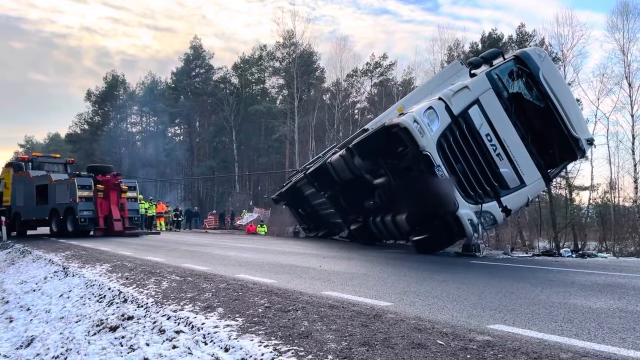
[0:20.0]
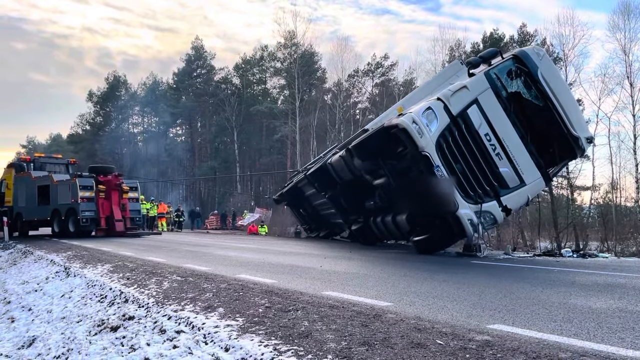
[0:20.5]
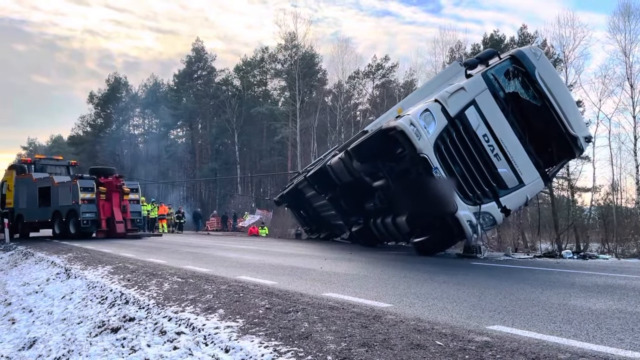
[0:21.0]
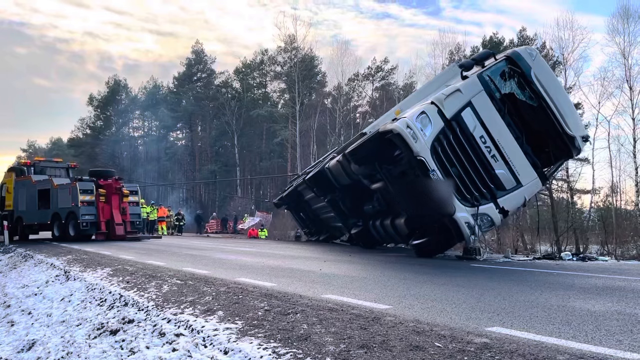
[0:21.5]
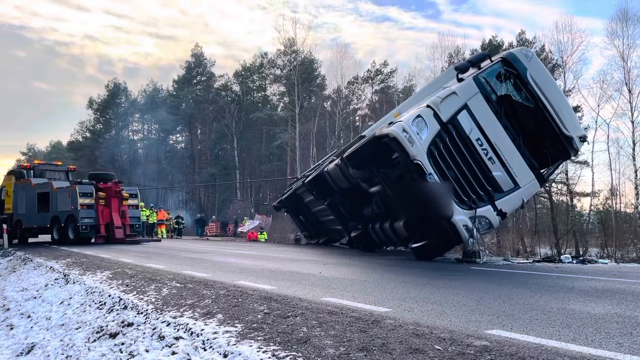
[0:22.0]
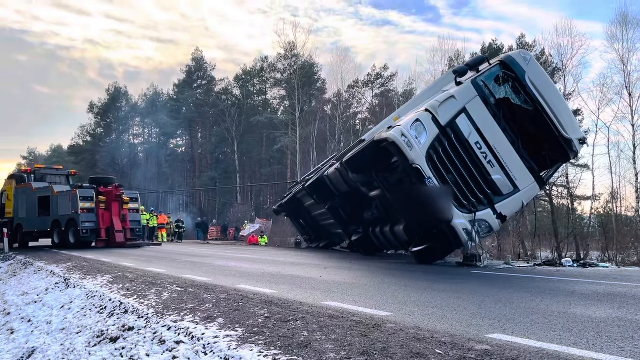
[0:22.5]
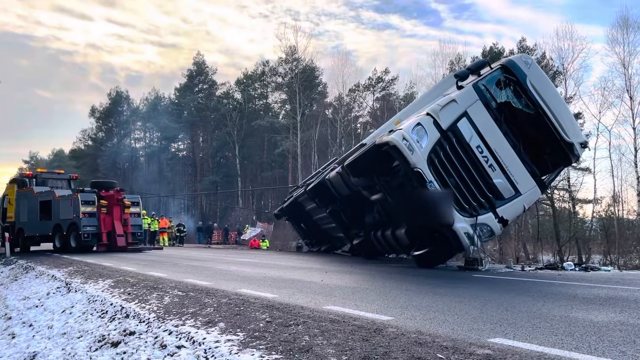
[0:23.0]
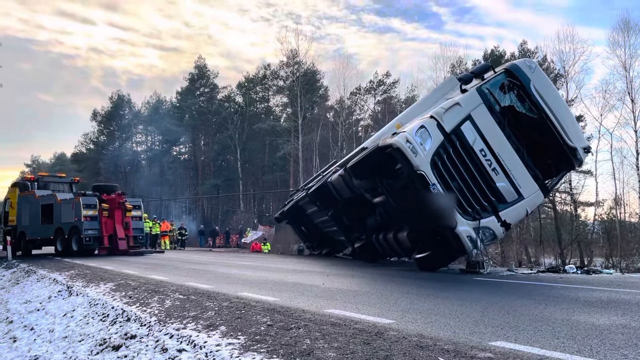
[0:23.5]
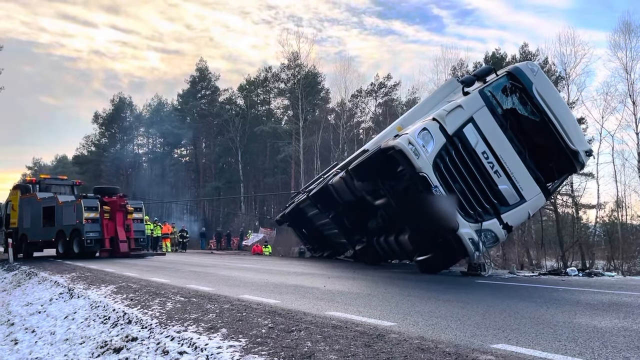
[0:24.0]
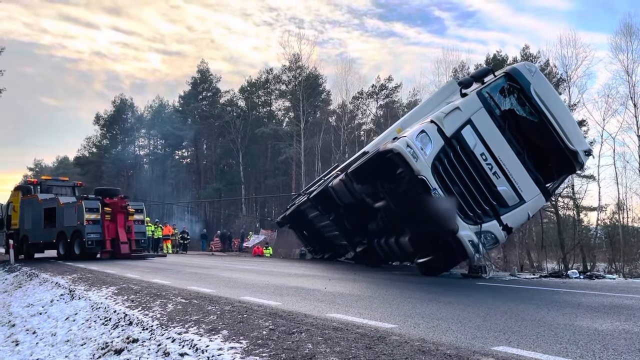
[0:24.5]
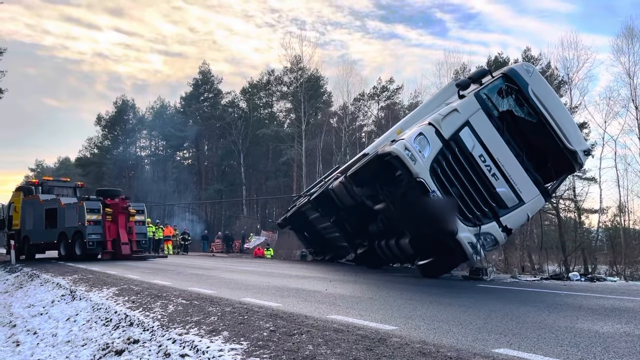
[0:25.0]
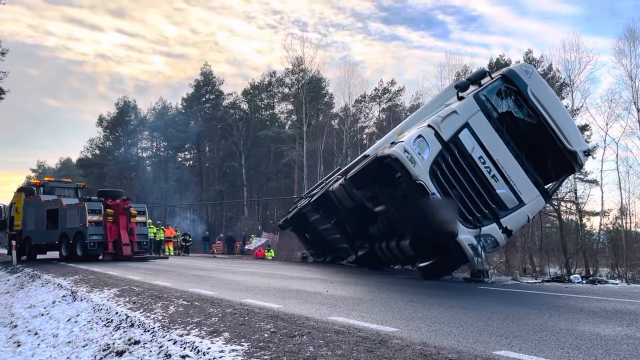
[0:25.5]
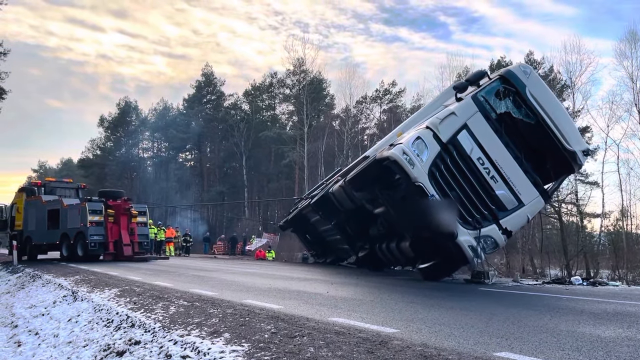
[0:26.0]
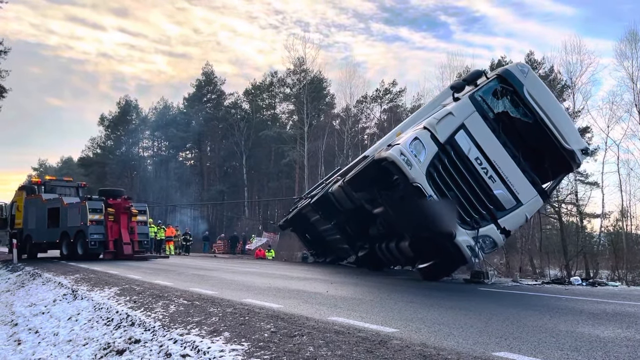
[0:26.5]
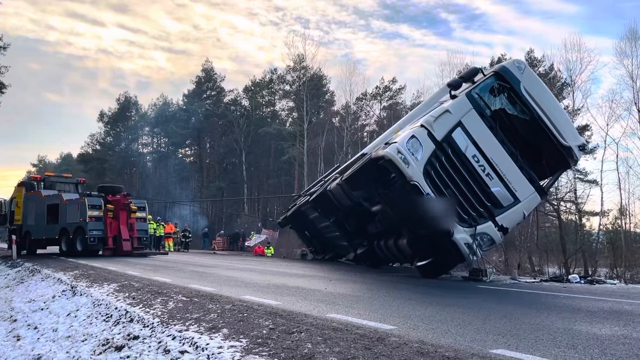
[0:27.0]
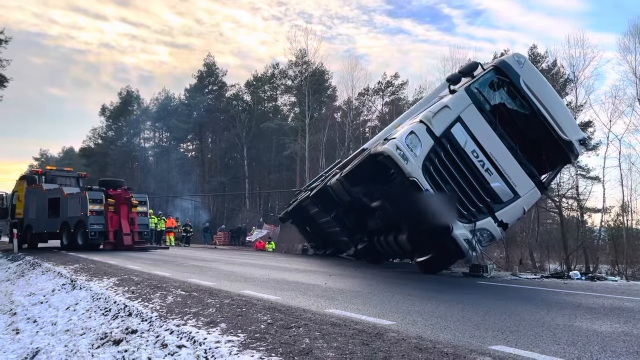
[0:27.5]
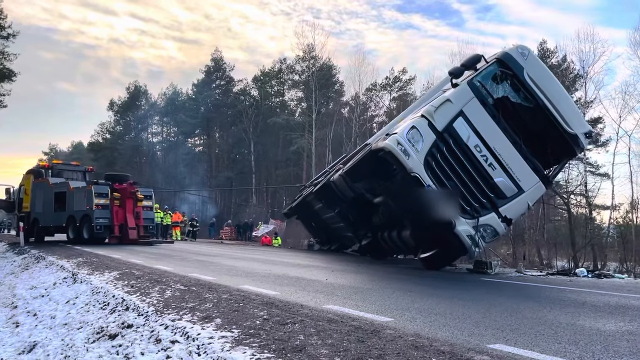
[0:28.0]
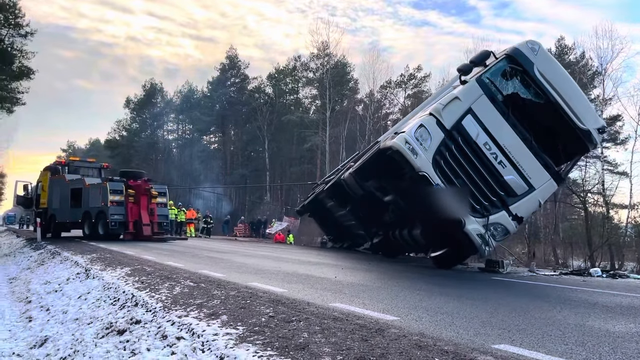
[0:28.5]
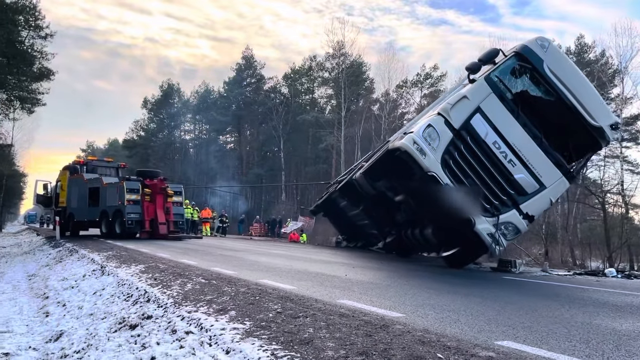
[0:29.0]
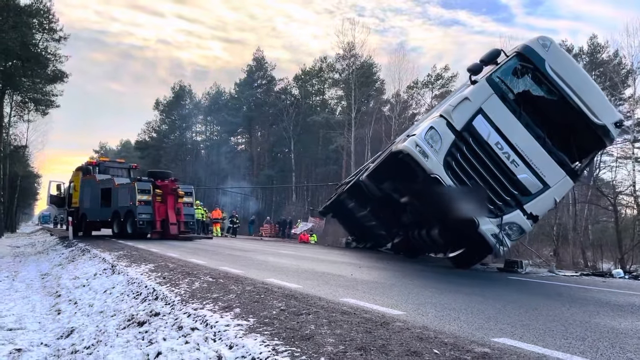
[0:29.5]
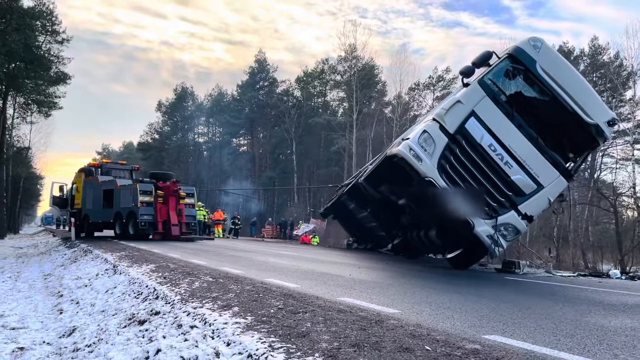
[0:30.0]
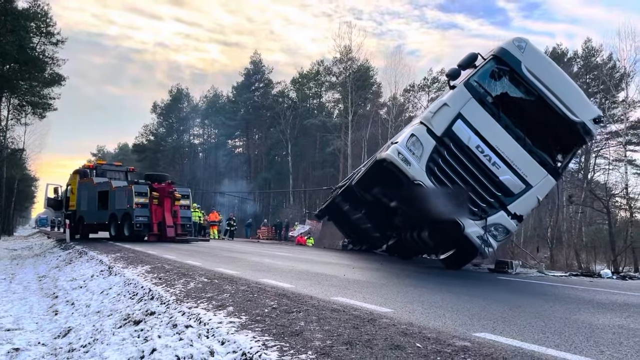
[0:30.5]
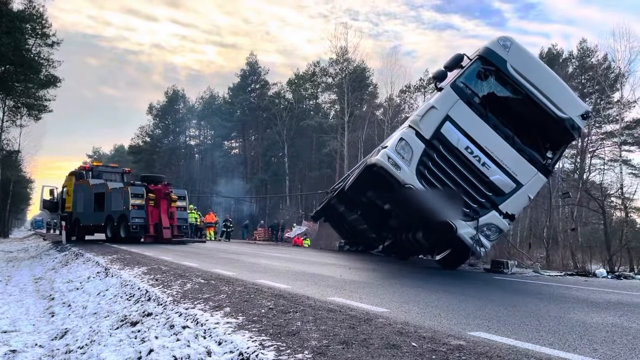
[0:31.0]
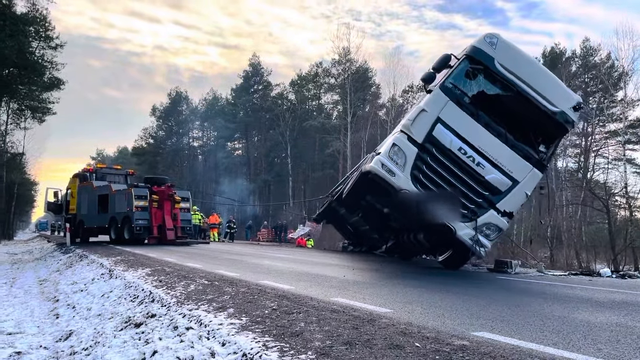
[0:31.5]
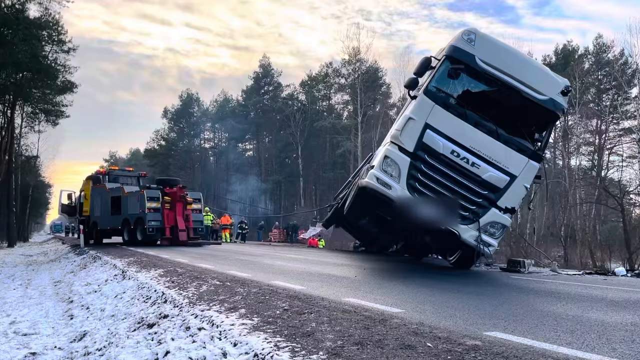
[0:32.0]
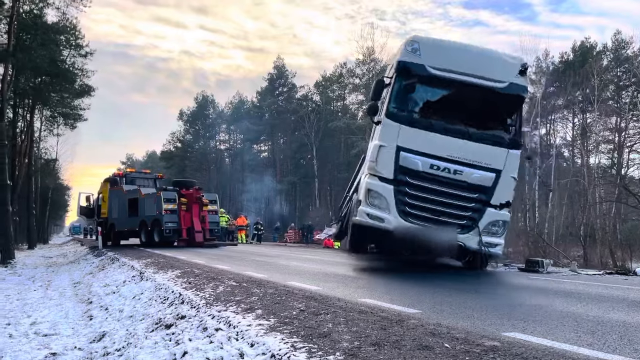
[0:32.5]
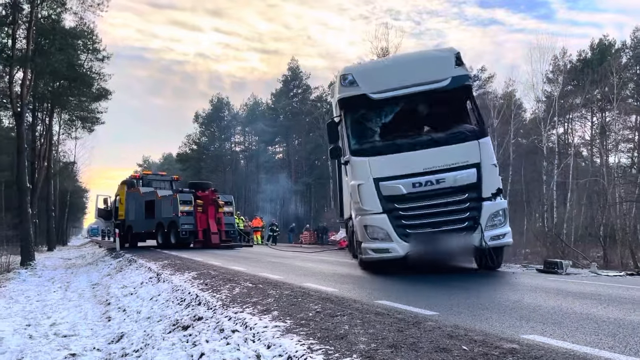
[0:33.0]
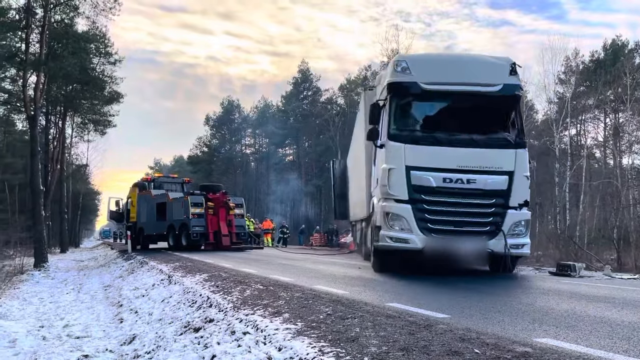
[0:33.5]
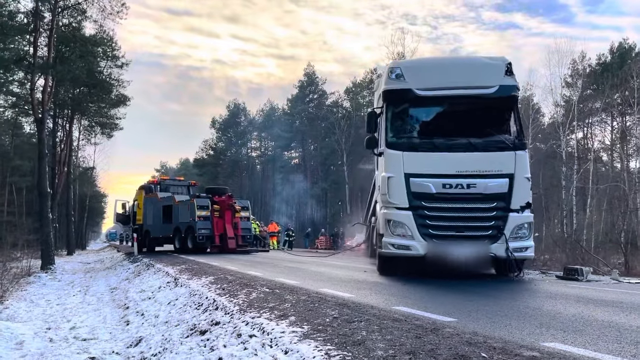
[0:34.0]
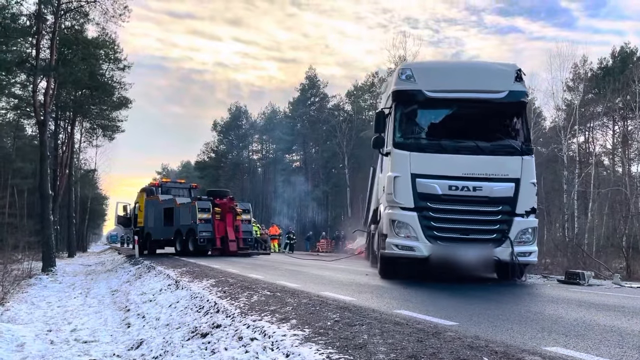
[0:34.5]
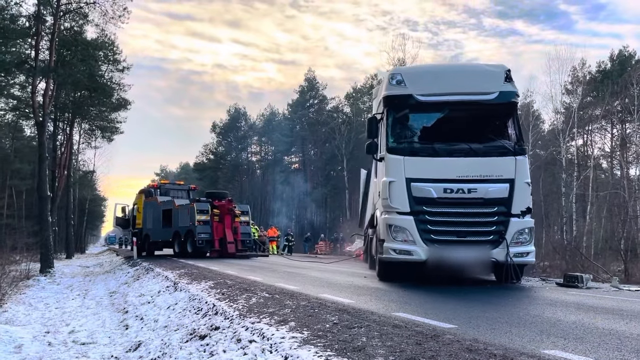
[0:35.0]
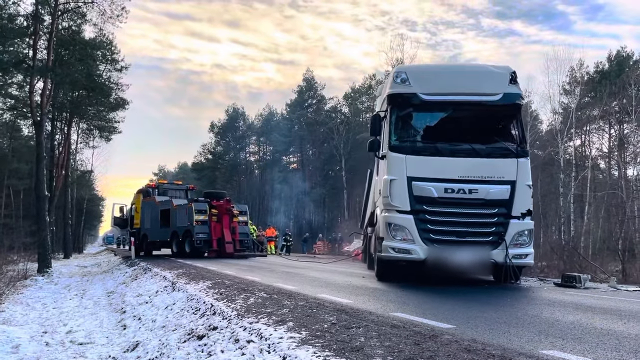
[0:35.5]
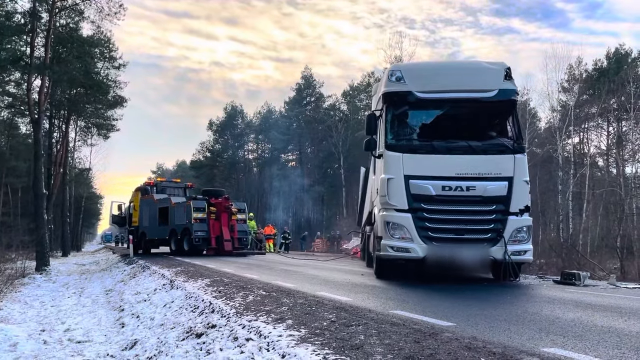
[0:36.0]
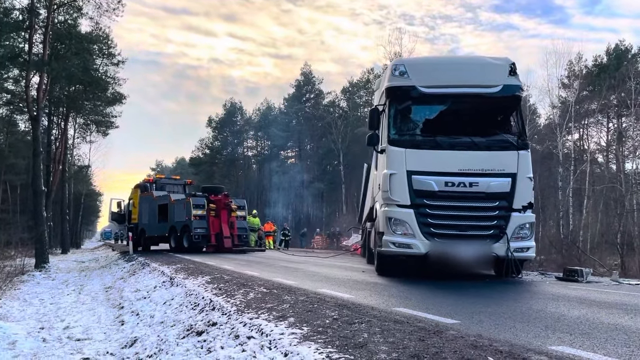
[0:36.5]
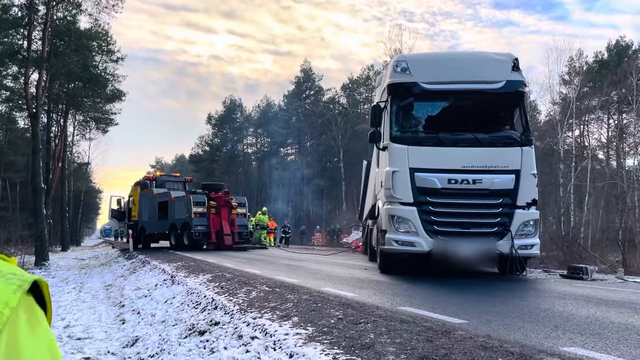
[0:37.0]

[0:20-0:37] The truck continues to be pulled upward, moving fairly slowly. Once it reaches a certain point it lunges and moves badly, and part of it springs to the left. The truck is a DAF brand model, and its windshield is busted out. At the back, on the left side of the frame, part of a panel on the truck is loose, and when the truck hits the ground the panel flops leftward. While the truck is being moved up, smaller parts fall off it to the right in the foreground. Once all the tires are on the ground, one of the men in yellow moves very quickly, apparently heading toward what might be a switch for the cable, and then he walks toward the truck now that it is set up on its tires.